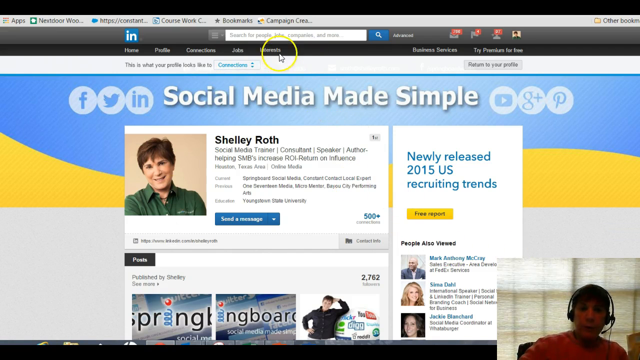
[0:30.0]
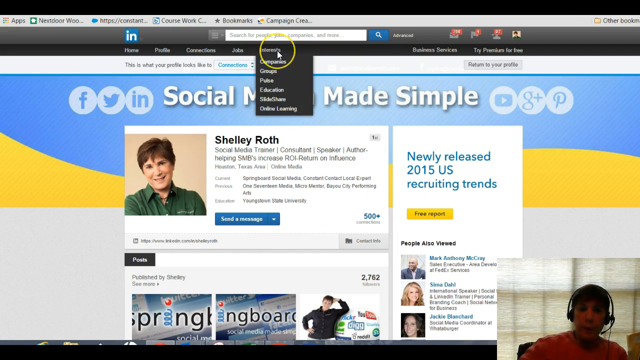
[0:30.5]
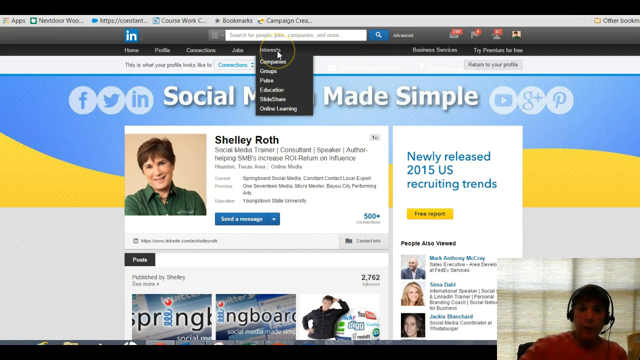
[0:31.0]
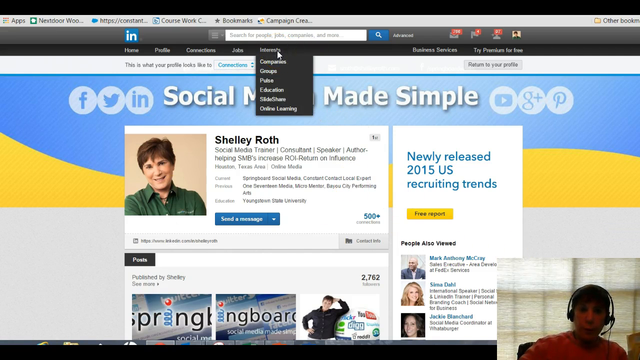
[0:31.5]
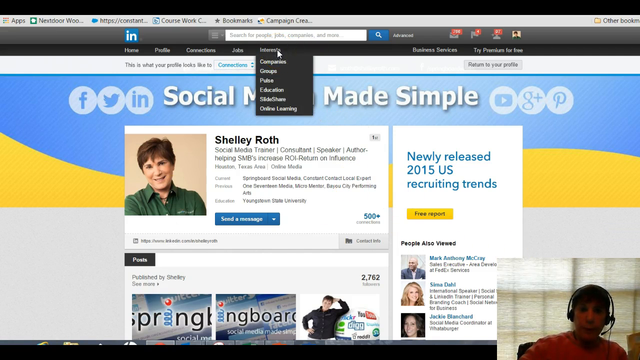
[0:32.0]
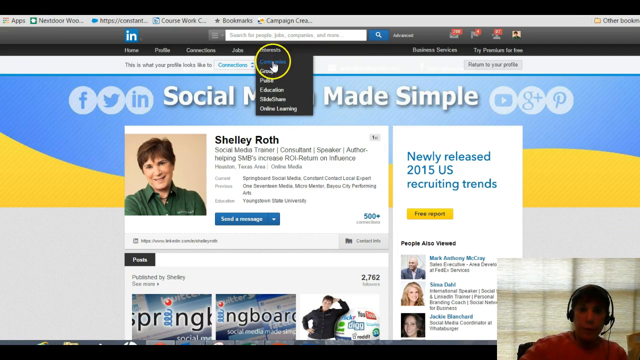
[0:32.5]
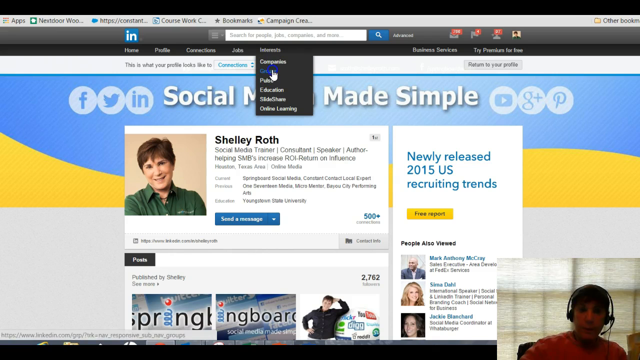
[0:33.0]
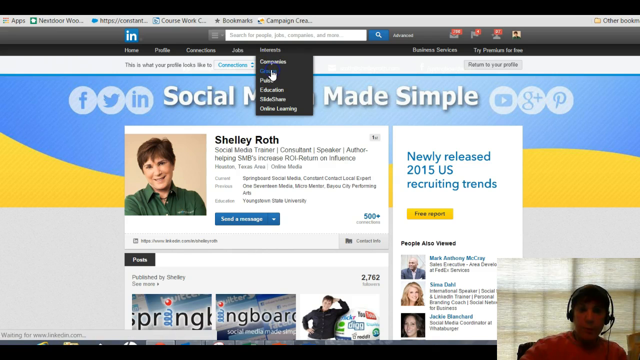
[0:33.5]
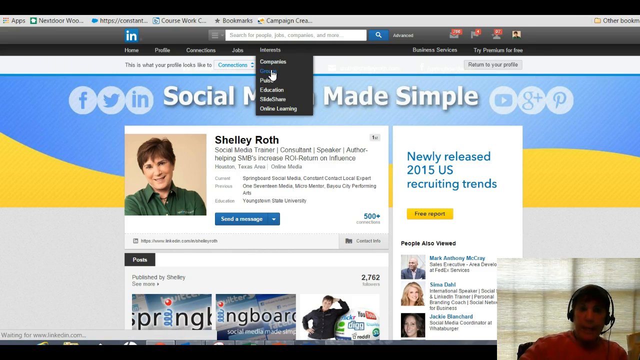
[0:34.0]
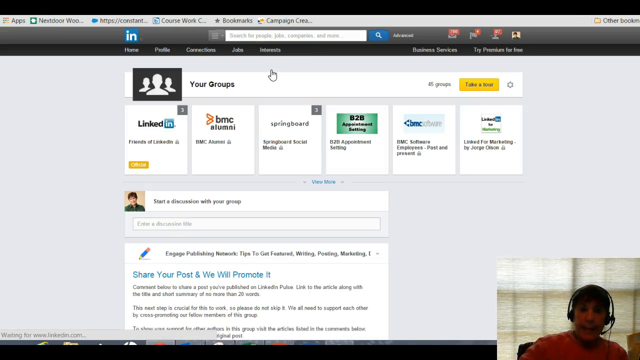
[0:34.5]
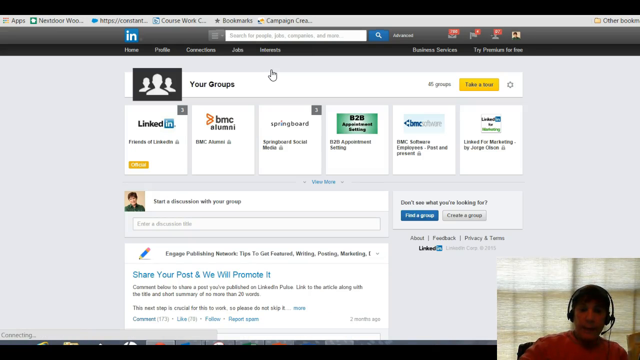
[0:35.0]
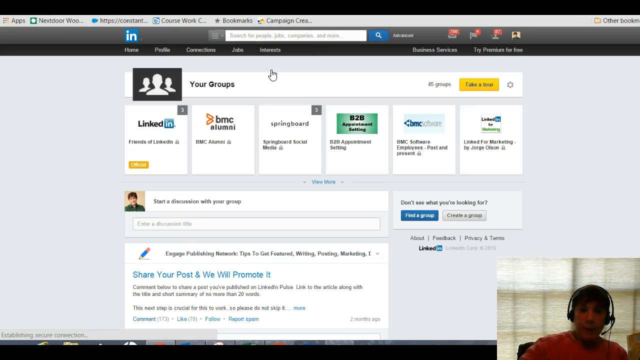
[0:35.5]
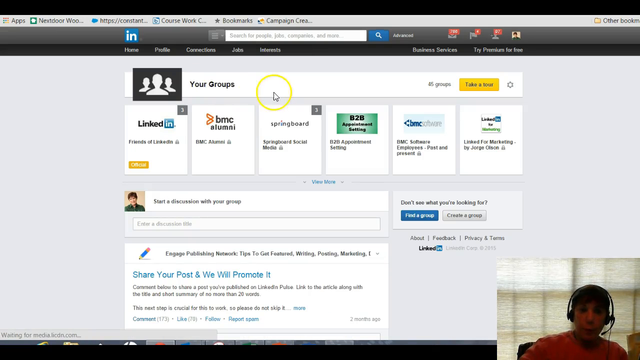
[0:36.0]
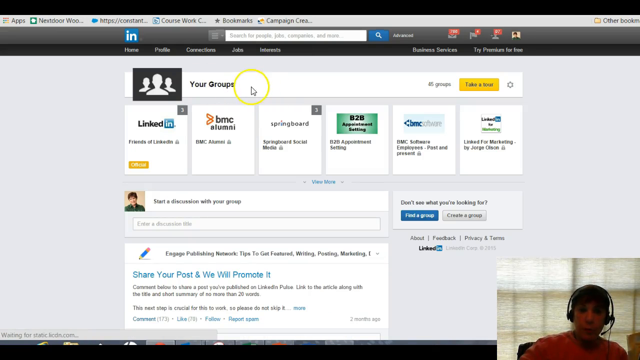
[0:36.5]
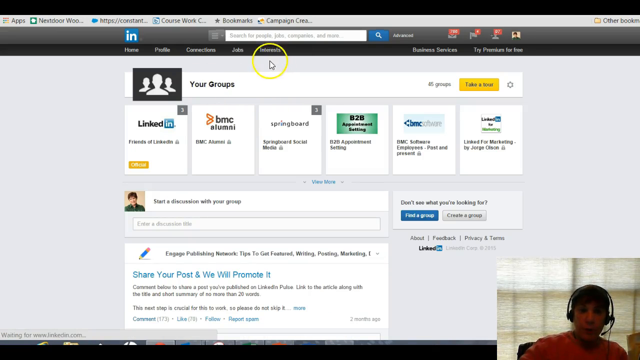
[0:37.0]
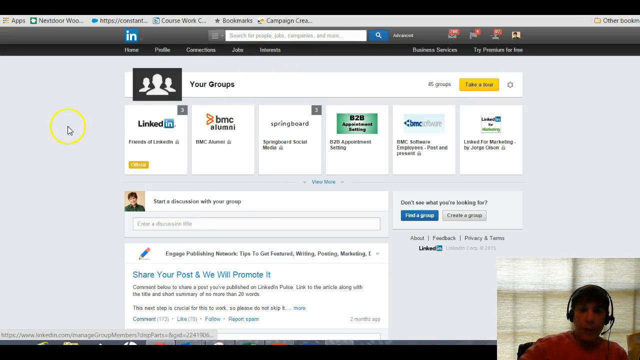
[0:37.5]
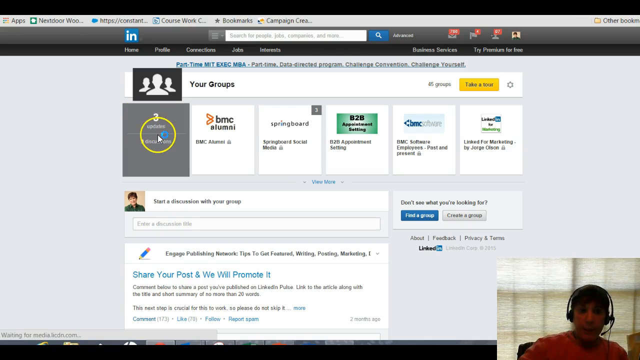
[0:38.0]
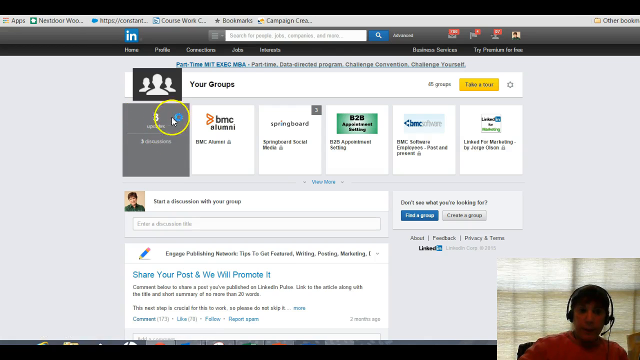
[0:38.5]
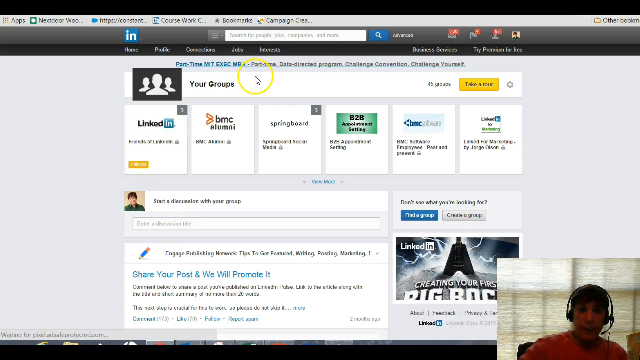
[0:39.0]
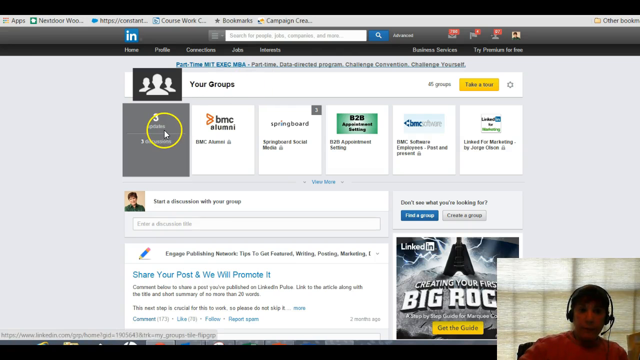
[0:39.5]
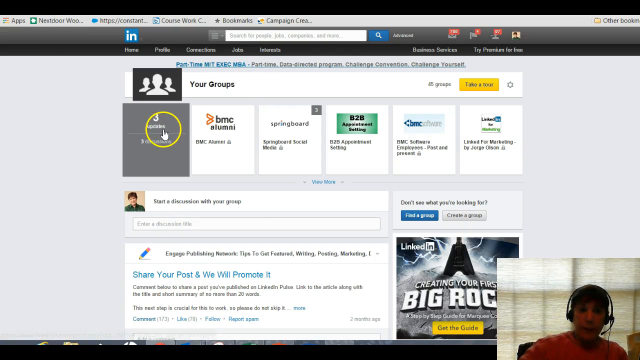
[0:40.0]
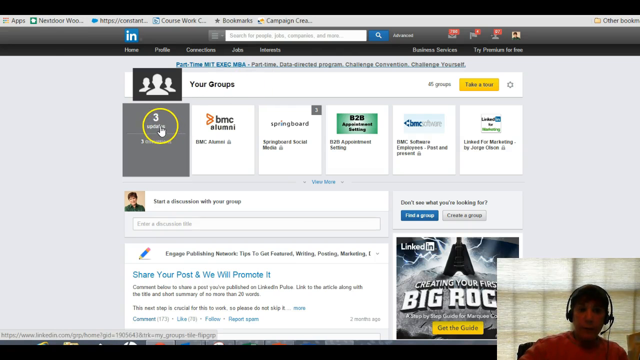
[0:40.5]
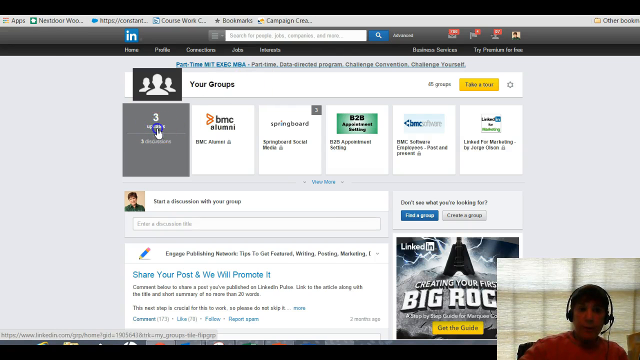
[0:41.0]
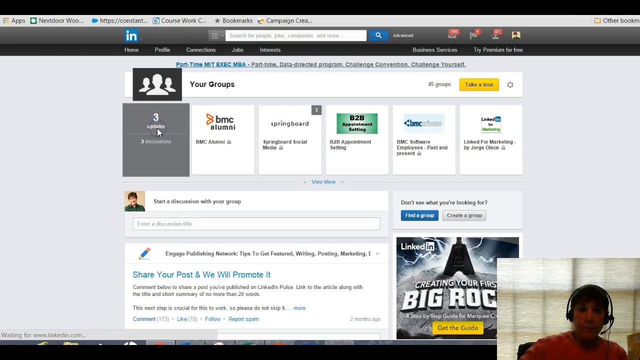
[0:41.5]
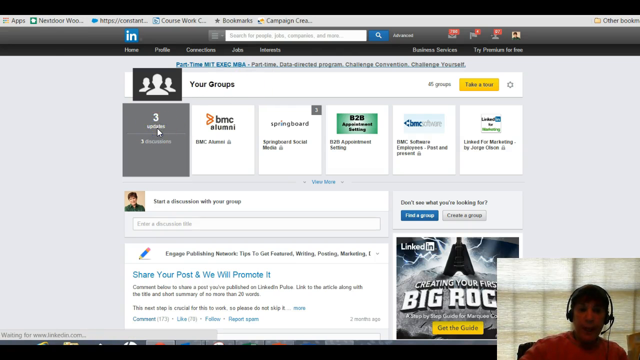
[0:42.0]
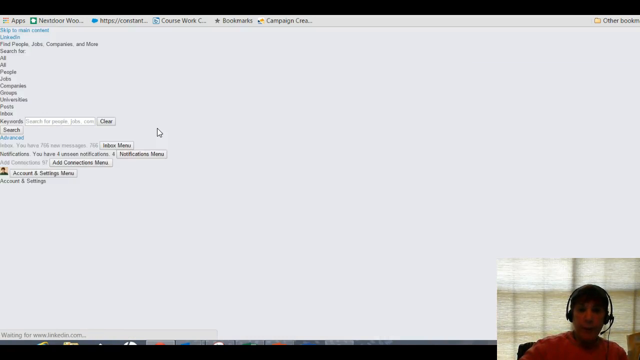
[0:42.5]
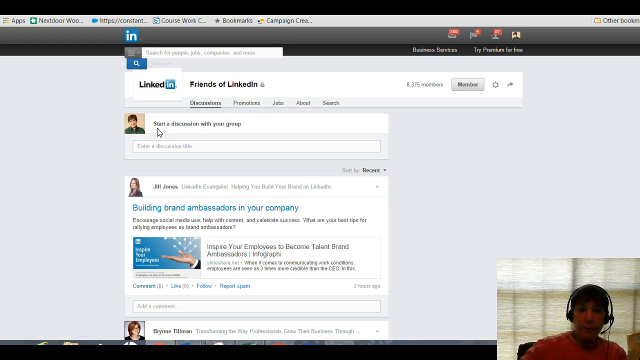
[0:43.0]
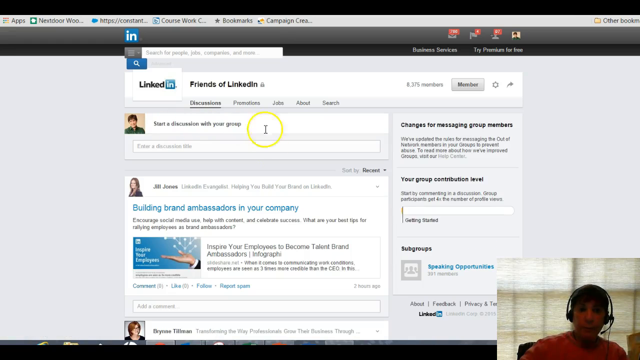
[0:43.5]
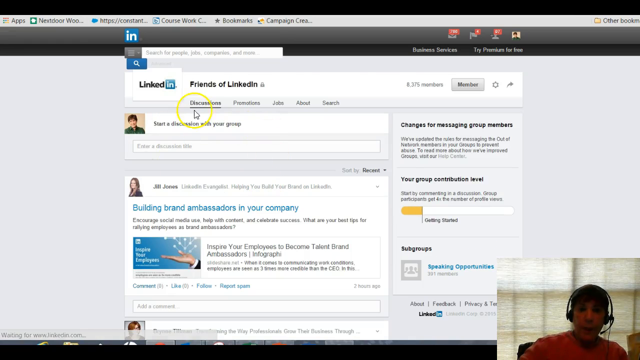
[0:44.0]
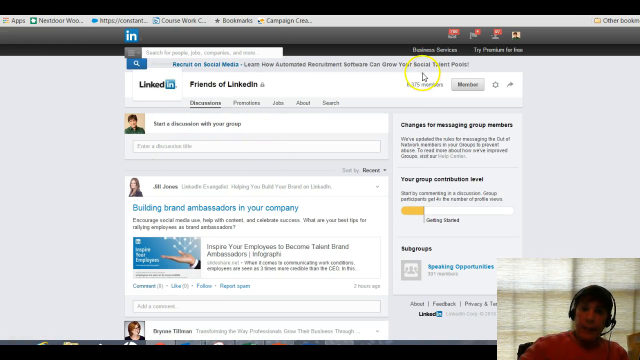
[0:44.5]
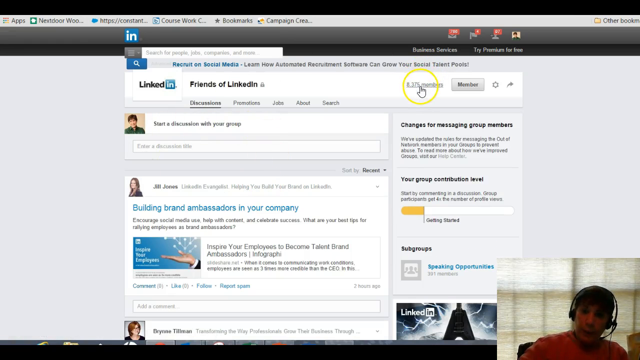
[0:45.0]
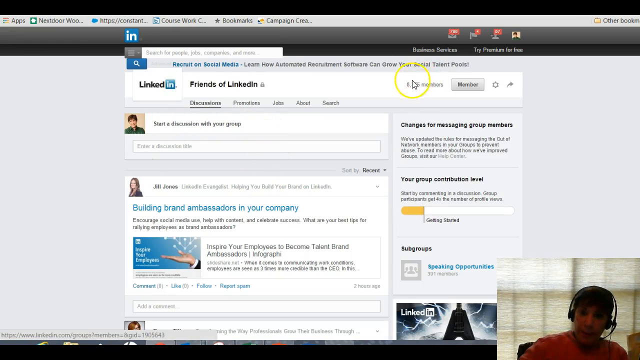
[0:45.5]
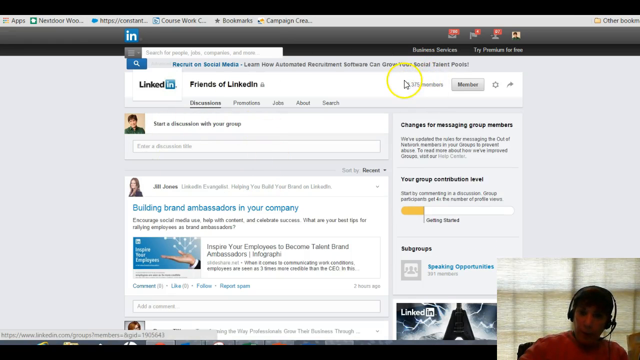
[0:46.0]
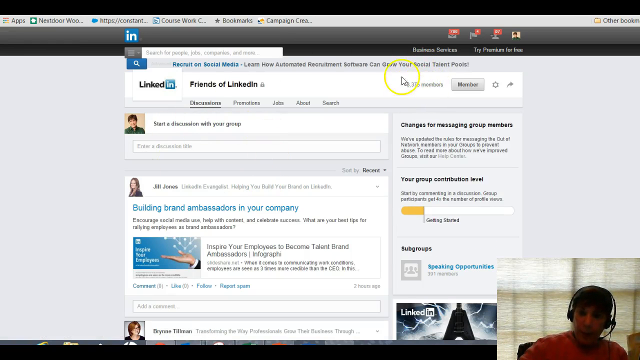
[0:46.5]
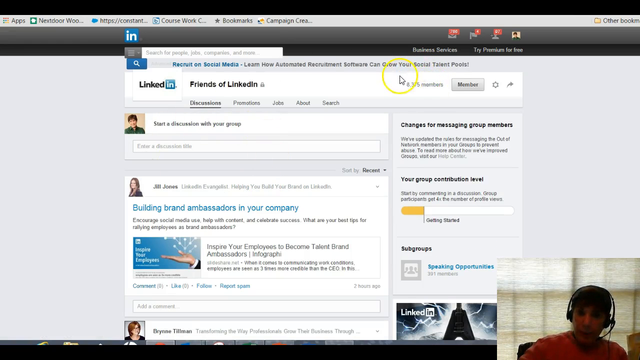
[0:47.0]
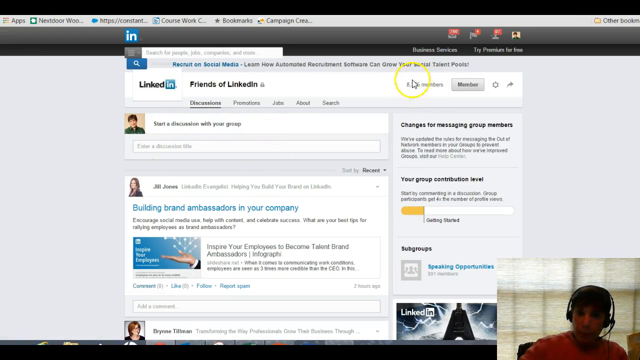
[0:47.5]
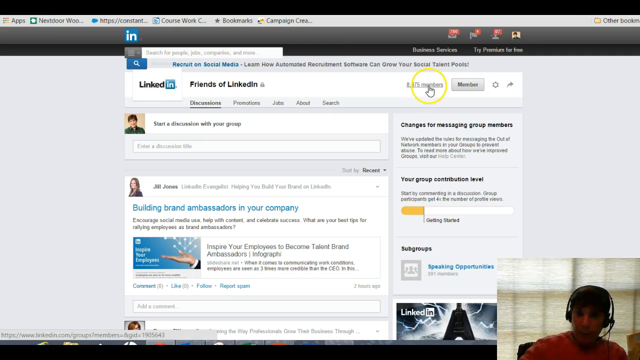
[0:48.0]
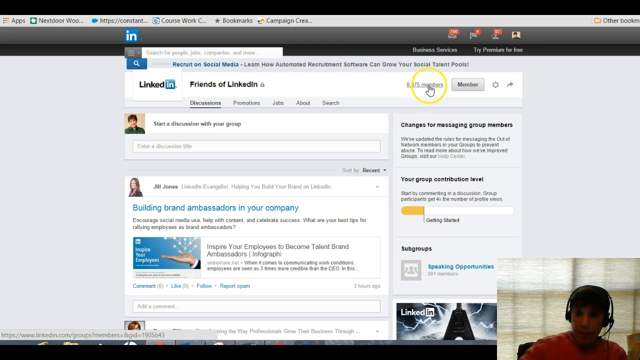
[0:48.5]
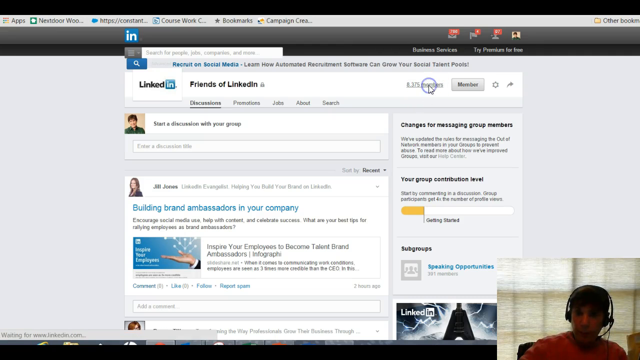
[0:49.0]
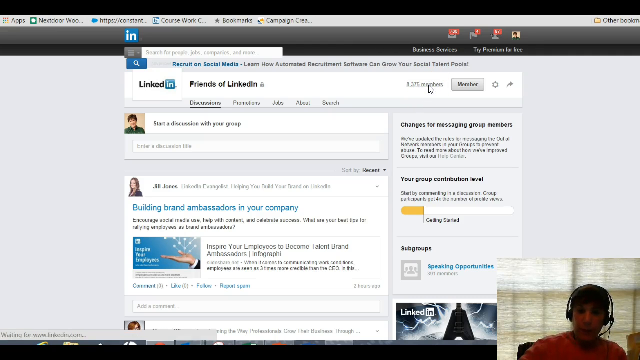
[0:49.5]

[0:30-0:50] Someone is recording their screen, with their webcam visible in the bottom right showing their face. They have a black headset with a microphone attached to the front and wear an orange shirt. On the LinkedIn web page, they are looking at a profile for Shelly Roth, a social media trainer, consultant, speaker, and author. They click a tab at the very top of the page that reads "interests," which opens a drop-down menu, and click "Groups," which takes them to a new page labeled "Your Groups" at the very top. They move the mouse cursor, circled in yellow, over the text "Your Groups" three times, then move it down to an option beneath that reads "LinkedIn" and click a button reading "three updates" that appears when they mouse over it. This opens a new page labeled "Friends of LinkedIn" at the top, with tabs for Discussions, which is selected, Promotions, Jobs, About, and Search. At the top right is the member count, 8,375 members; the user moves the cursor over it, circles the number four times, and clicks on it.